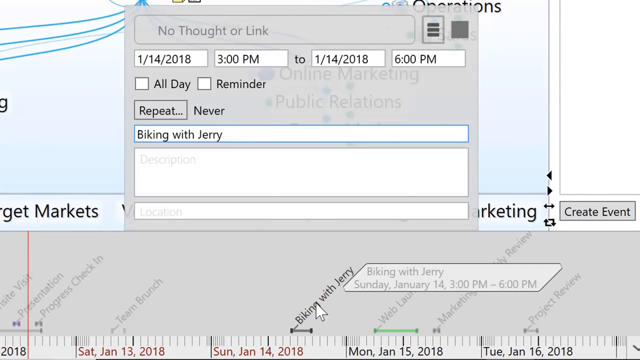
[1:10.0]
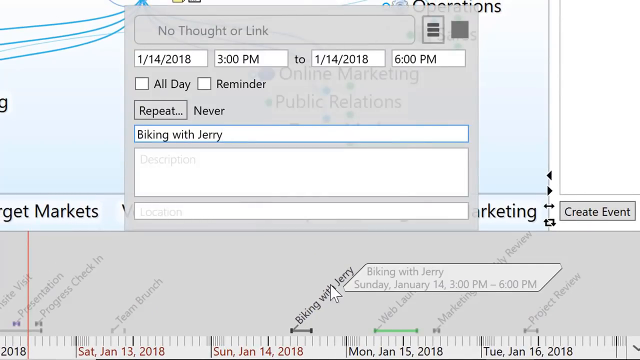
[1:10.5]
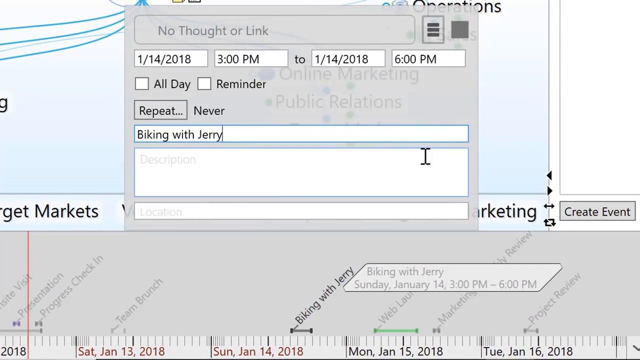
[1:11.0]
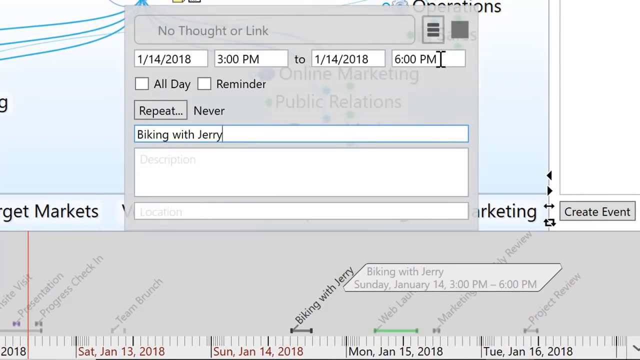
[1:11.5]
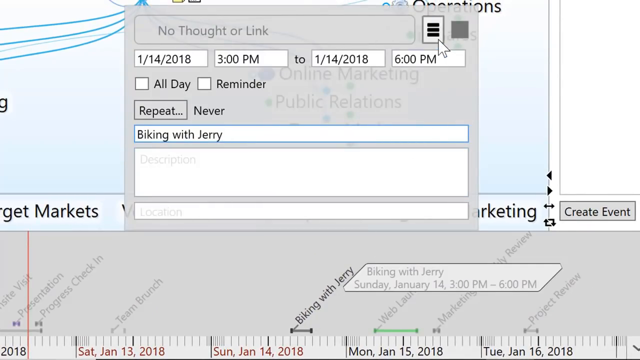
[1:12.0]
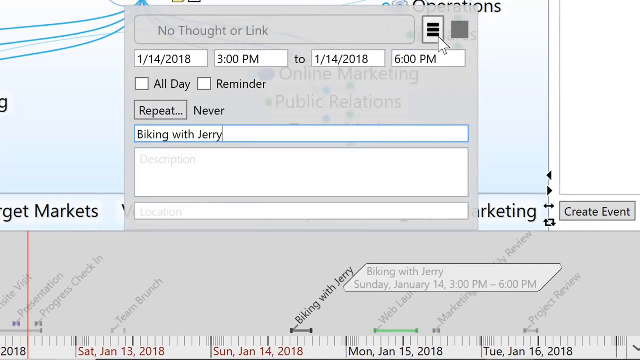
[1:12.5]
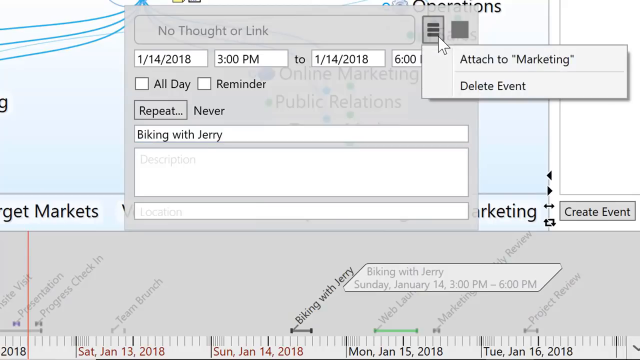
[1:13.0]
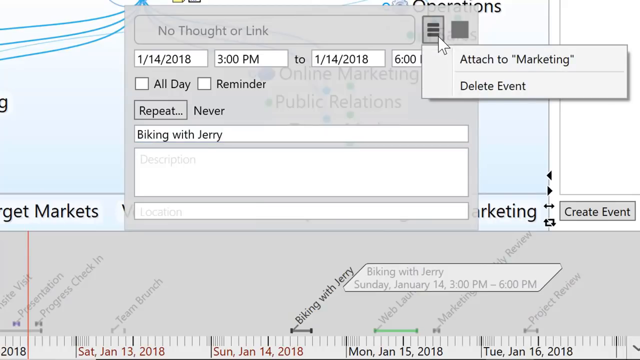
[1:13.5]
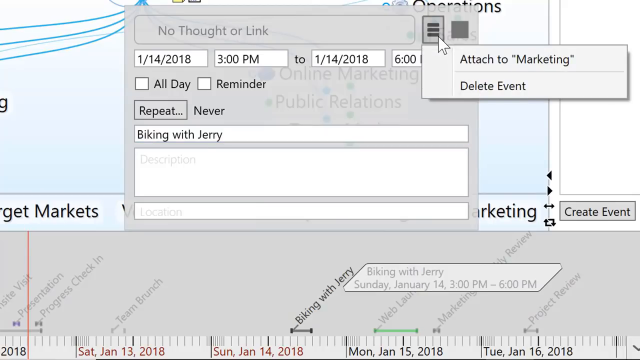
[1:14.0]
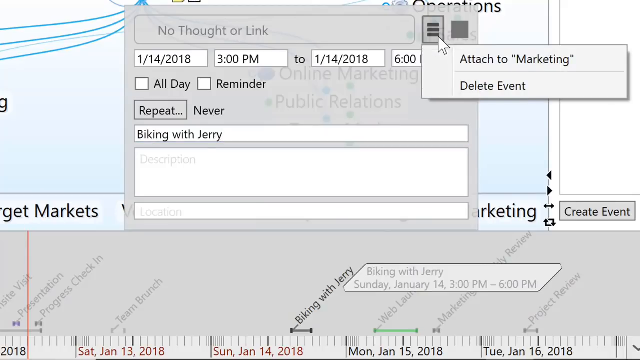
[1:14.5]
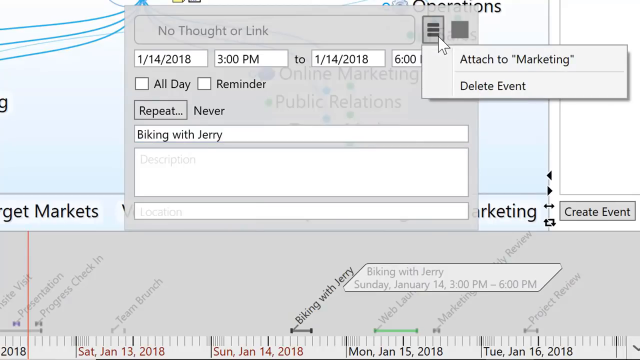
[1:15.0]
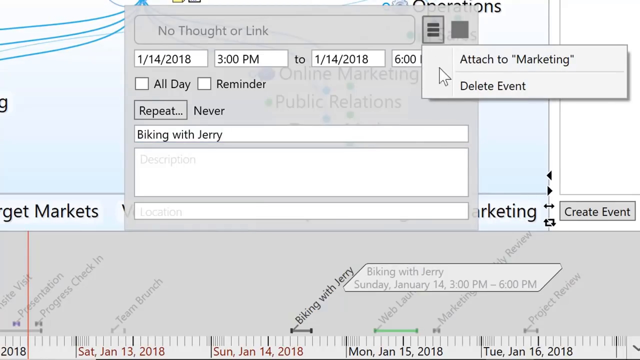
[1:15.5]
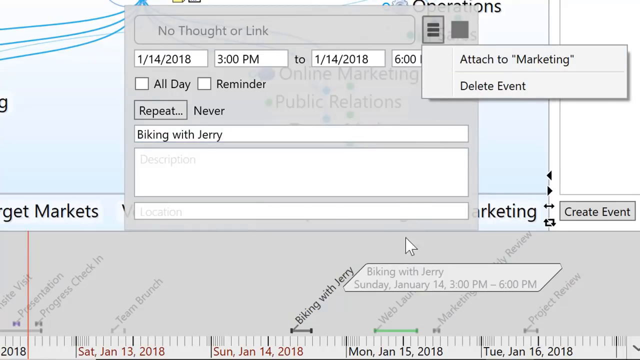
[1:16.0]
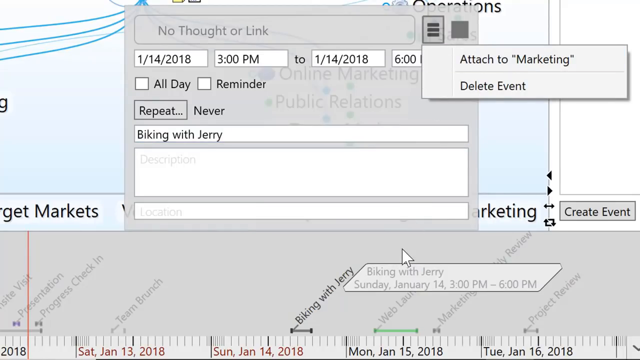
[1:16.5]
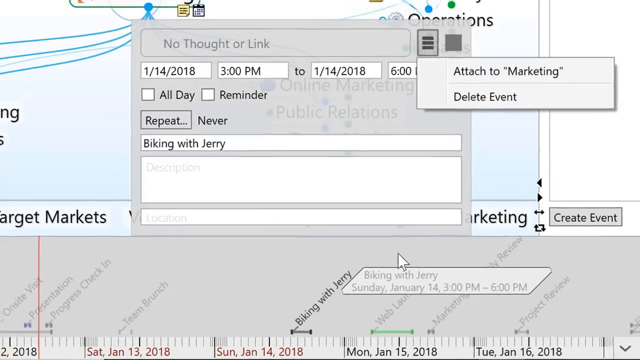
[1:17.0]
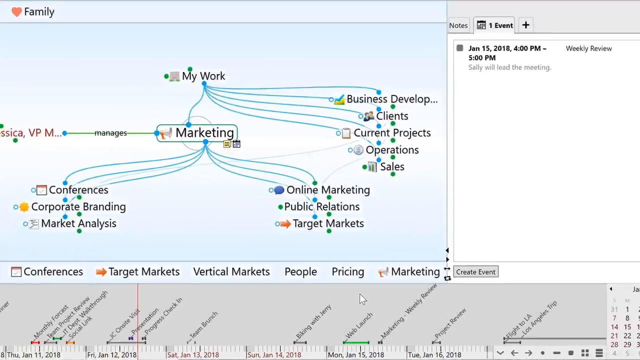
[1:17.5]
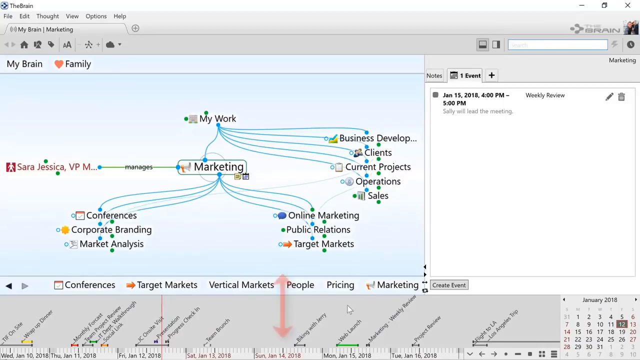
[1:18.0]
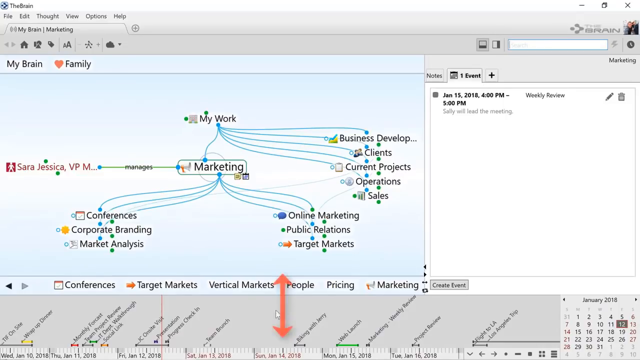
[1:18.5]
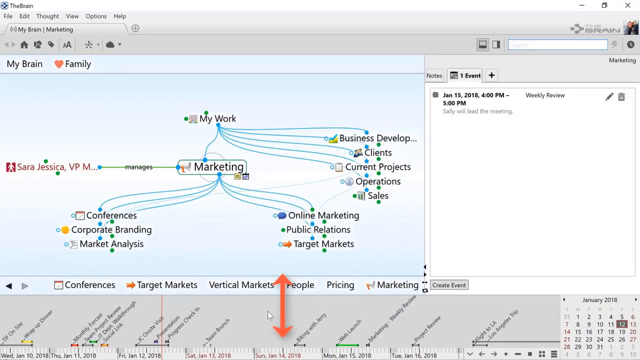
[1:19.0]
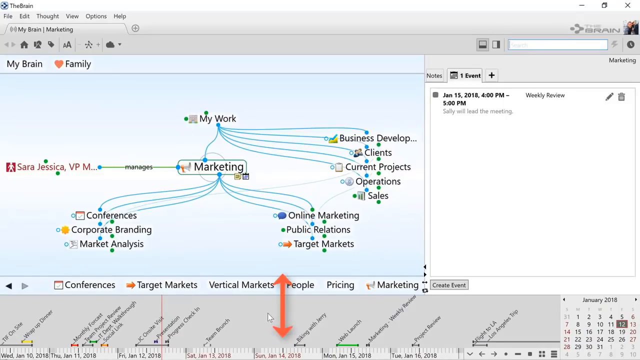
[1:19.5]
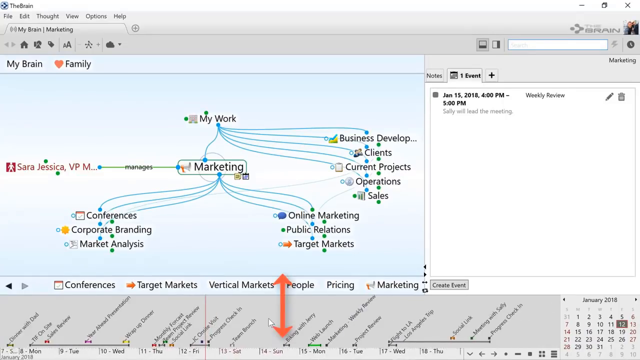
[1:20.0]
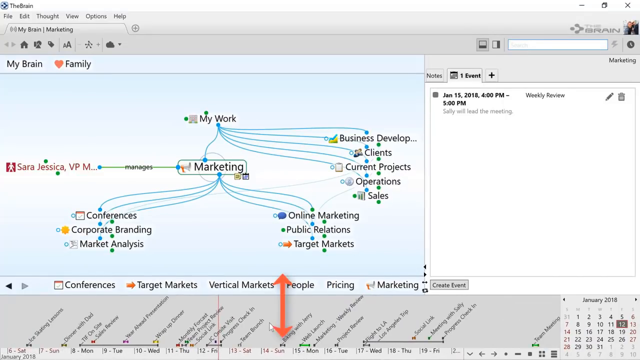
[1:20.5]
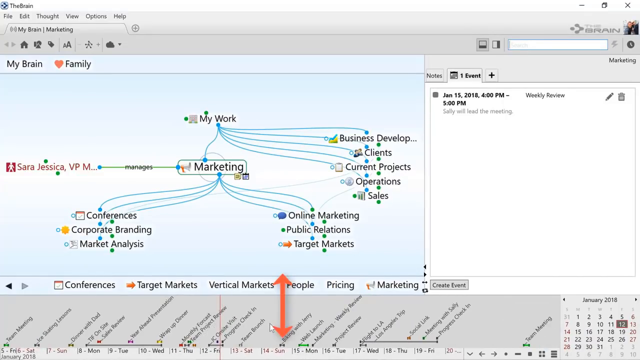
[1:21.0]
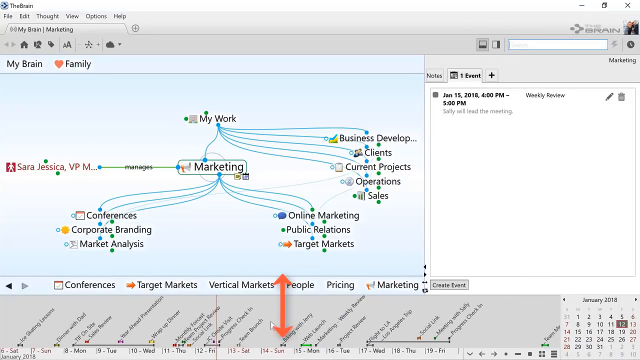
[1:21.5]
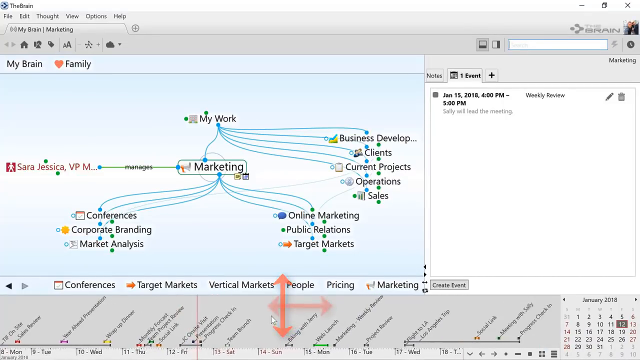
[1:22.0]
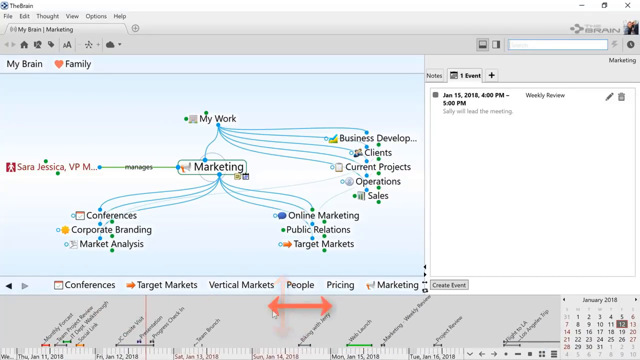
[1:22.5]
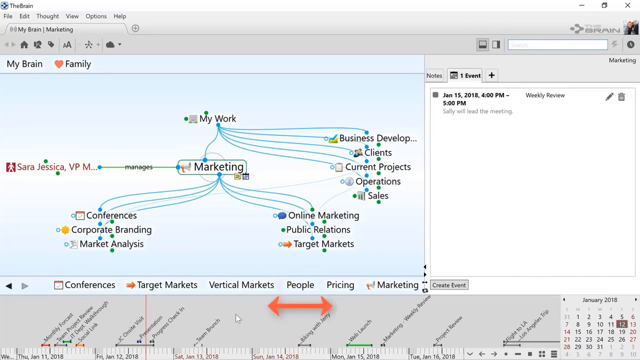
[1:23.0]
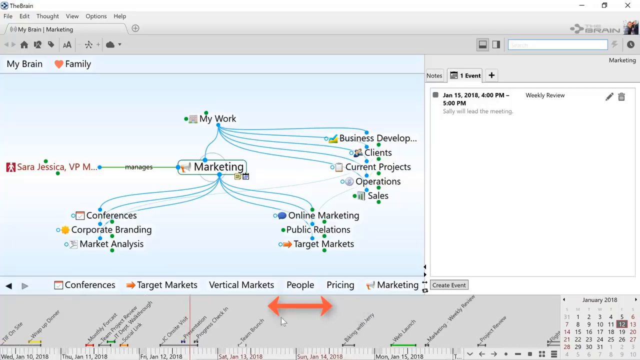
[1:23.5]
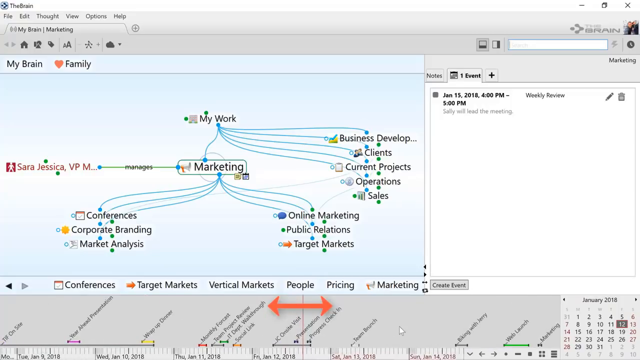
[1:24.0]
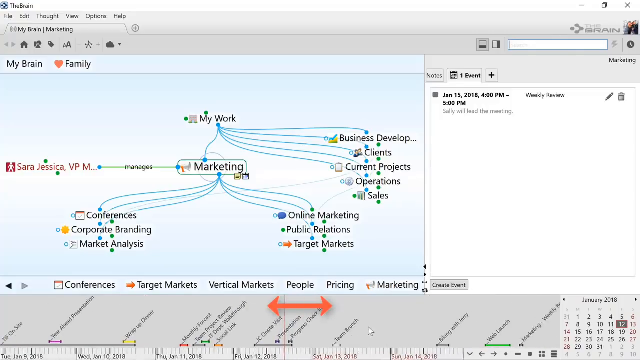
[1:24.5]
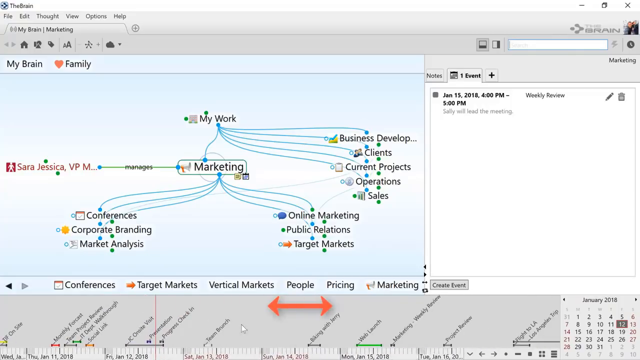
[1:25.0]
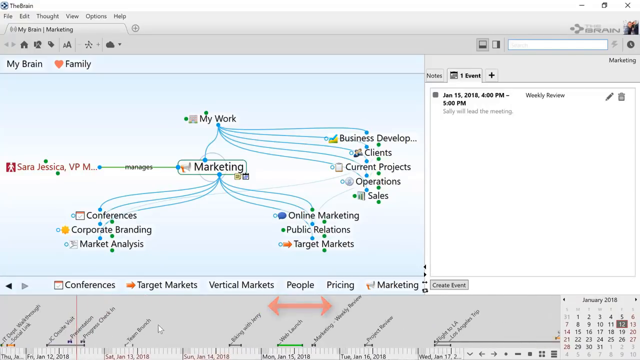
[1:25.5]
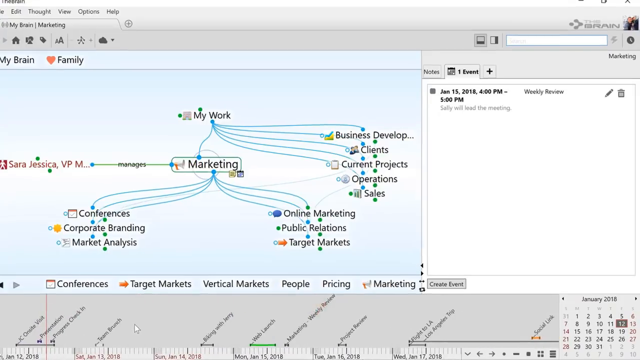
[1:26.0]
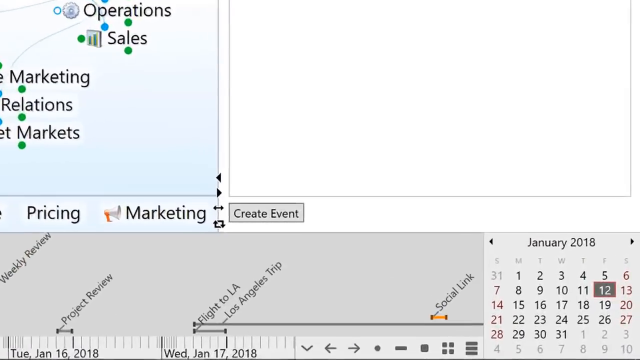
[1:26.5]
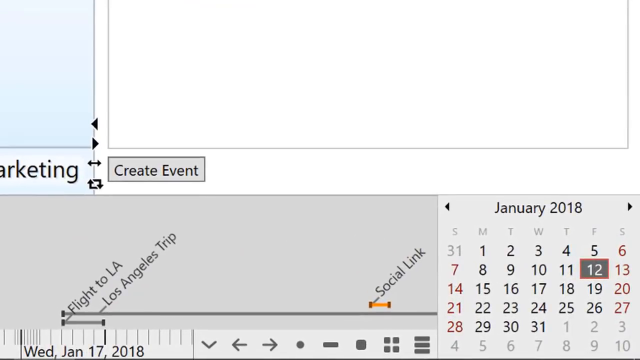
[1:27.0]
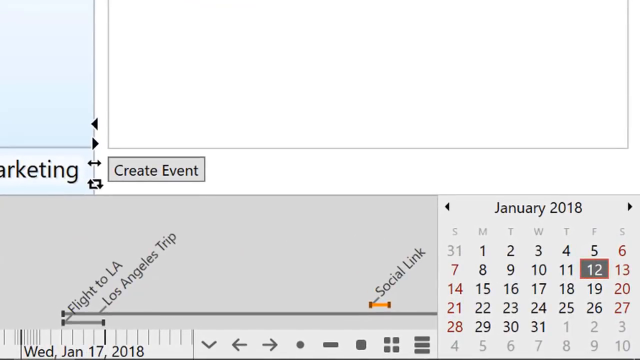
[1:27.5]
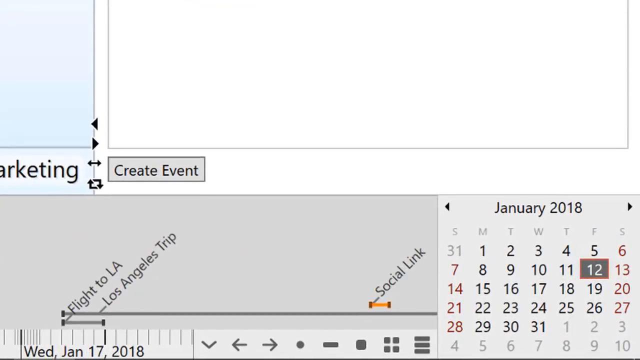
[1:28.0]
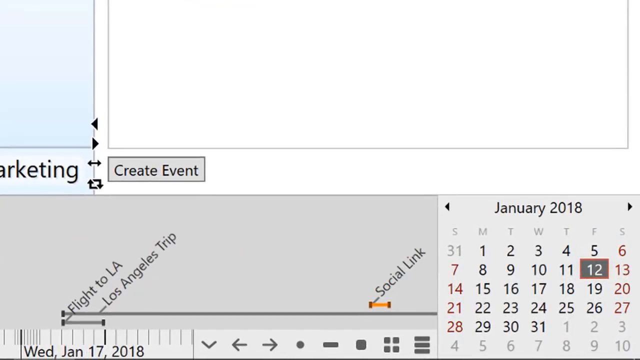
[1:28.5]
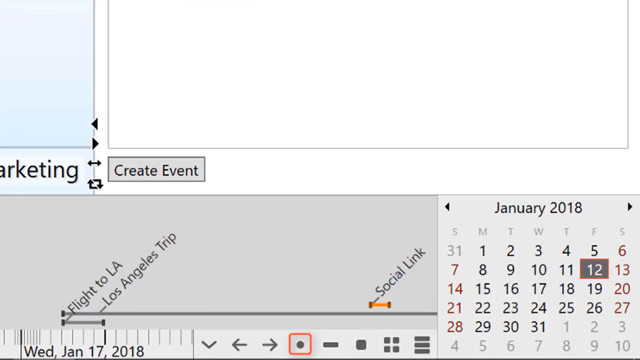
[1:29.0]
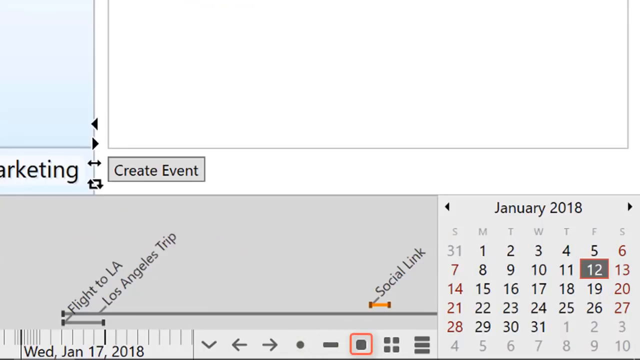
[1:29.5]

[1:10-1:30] The event "biking with Jerry" is shown, with three horizontal boxes on it. Selecting these boxes brings up a small menu reading "attach to marketing" or "delete event"; the event is apparently not attached to work, as it is a personal event. The timeline display options are then shown: events placed closer together so all are visible without detail, or spread out so scrolling is needed to see them. The view scrolls to "social link," which has a small orange line under it. A small menu at the bottom has a down arrow, left and right arrows, a circle button, a line button, a square button, four square buttons, and three horizontal option buttons.